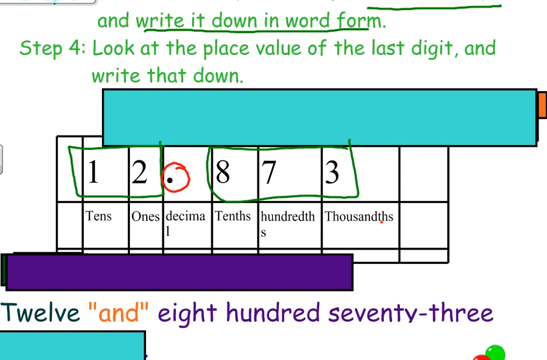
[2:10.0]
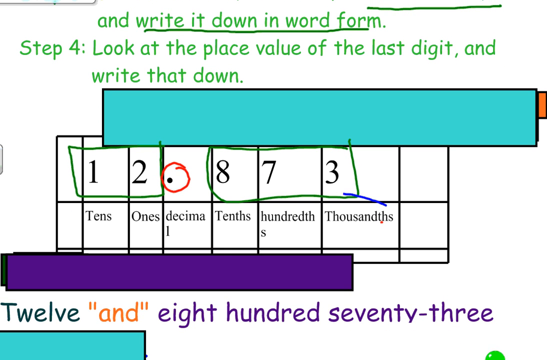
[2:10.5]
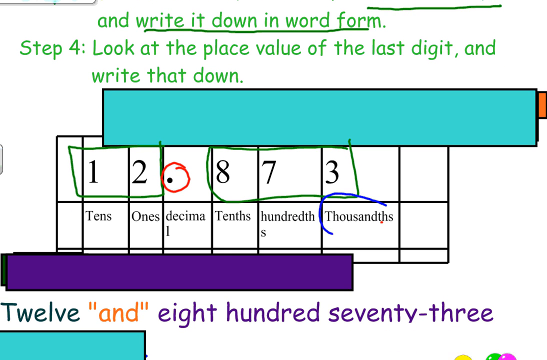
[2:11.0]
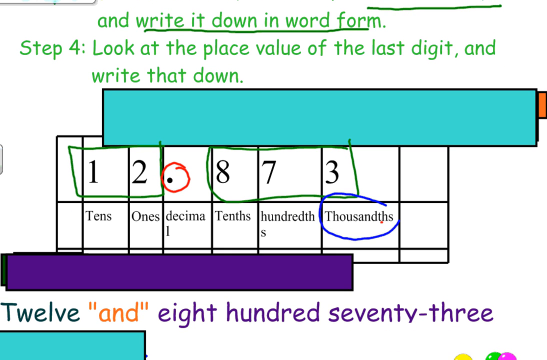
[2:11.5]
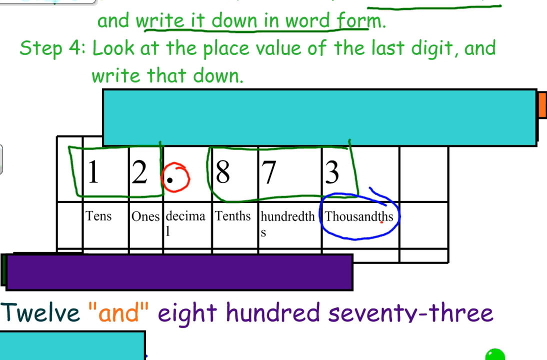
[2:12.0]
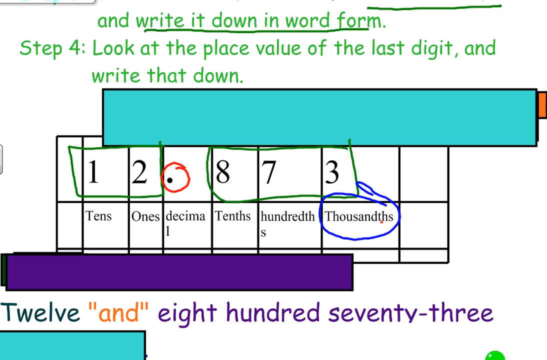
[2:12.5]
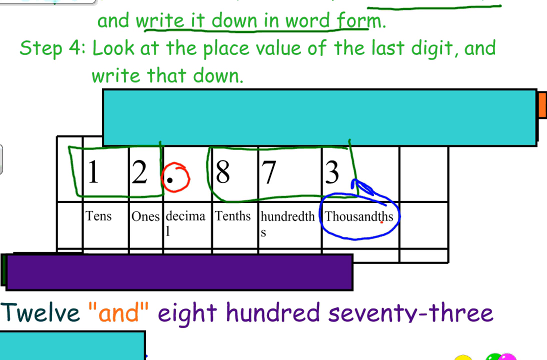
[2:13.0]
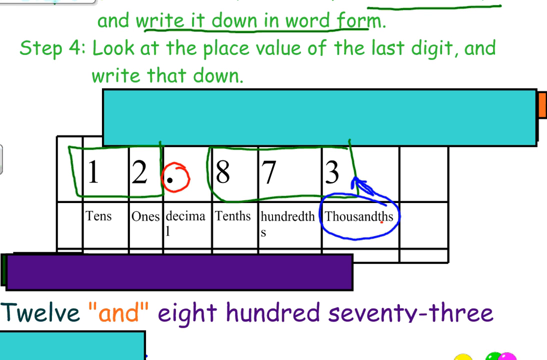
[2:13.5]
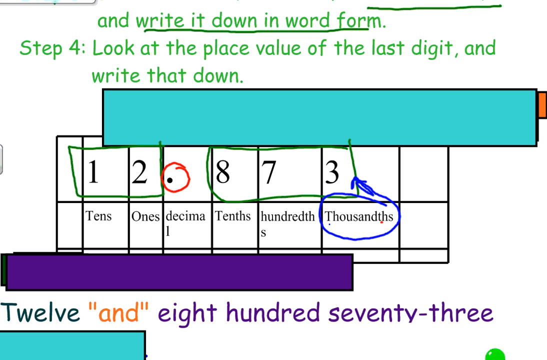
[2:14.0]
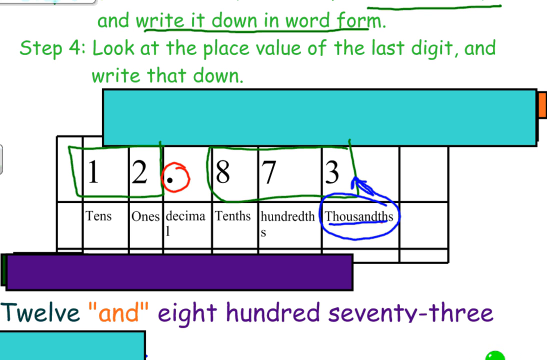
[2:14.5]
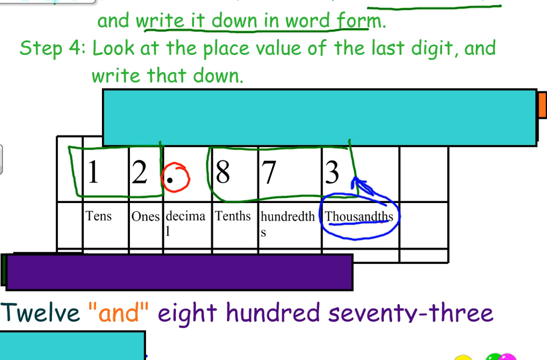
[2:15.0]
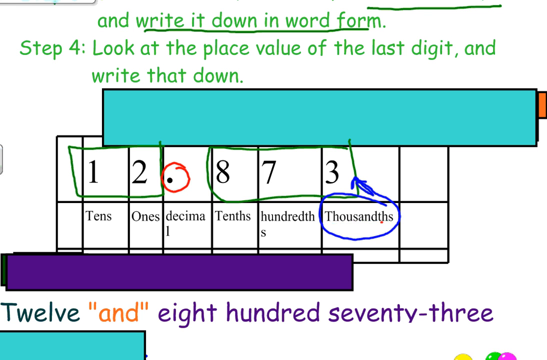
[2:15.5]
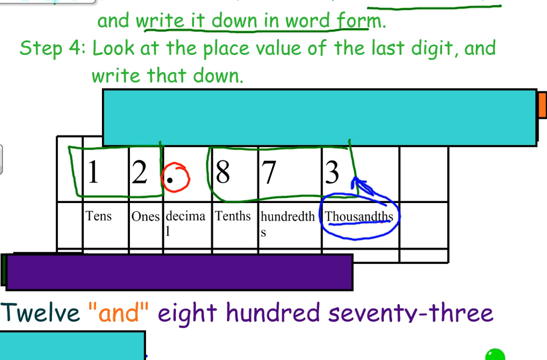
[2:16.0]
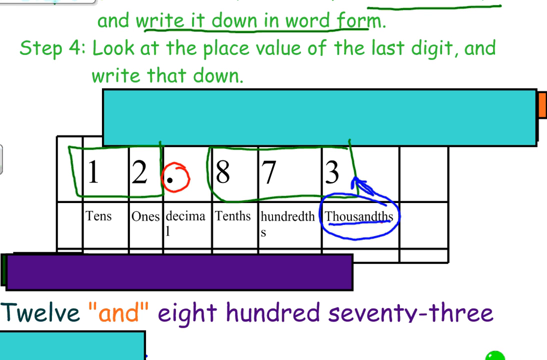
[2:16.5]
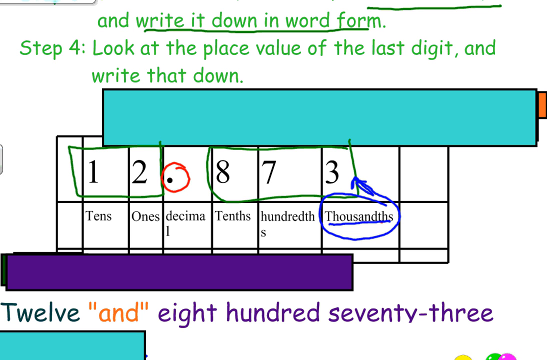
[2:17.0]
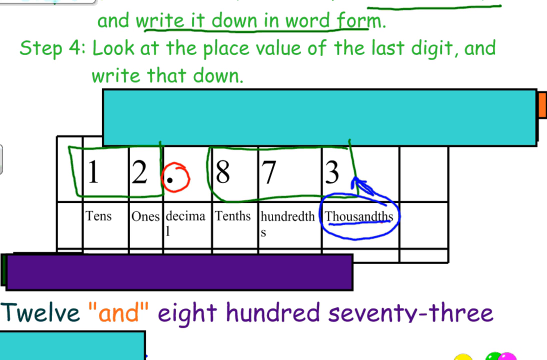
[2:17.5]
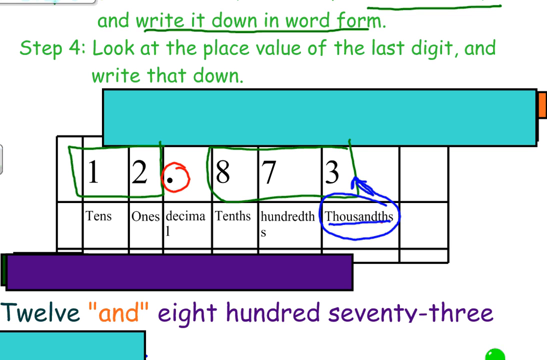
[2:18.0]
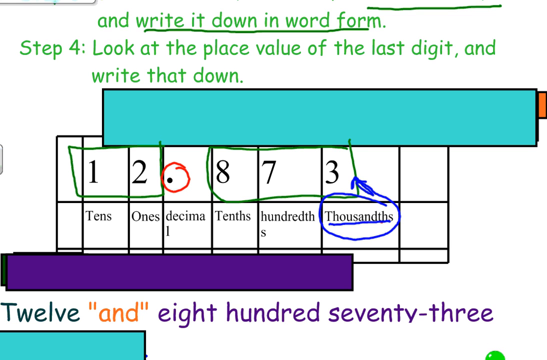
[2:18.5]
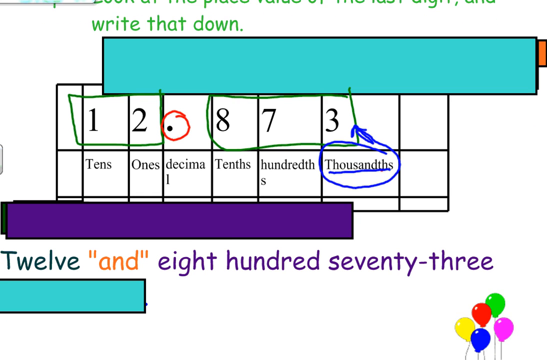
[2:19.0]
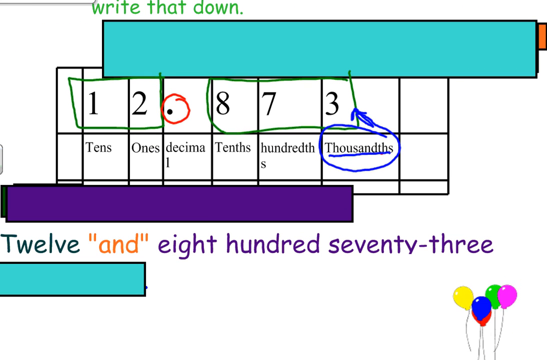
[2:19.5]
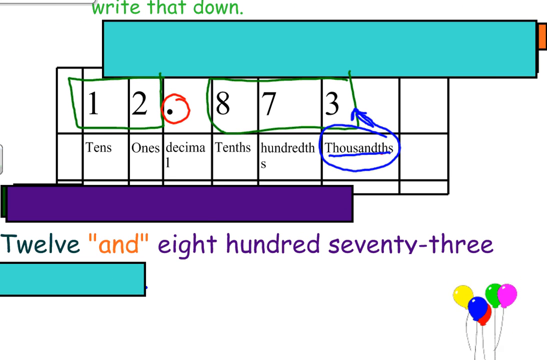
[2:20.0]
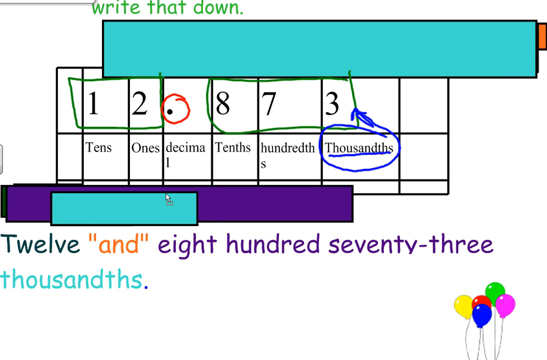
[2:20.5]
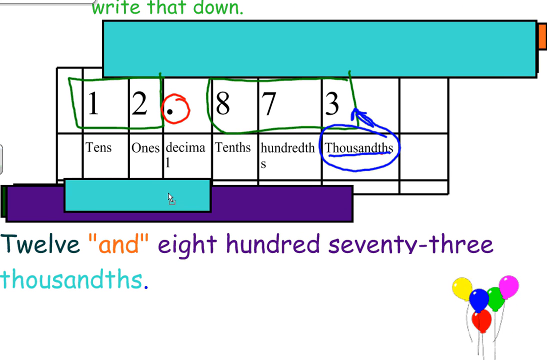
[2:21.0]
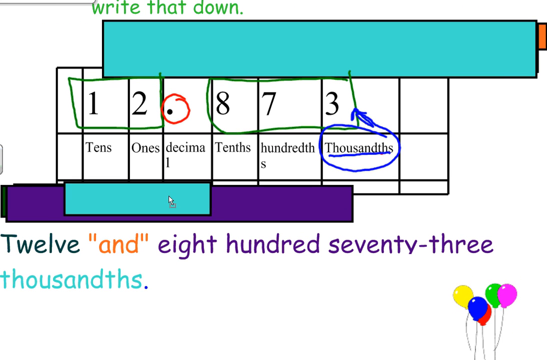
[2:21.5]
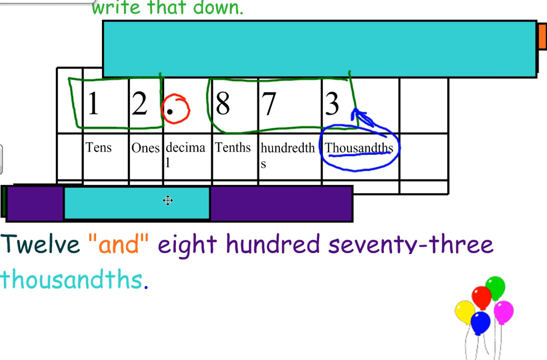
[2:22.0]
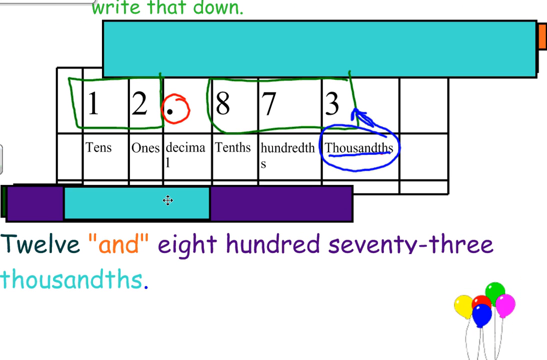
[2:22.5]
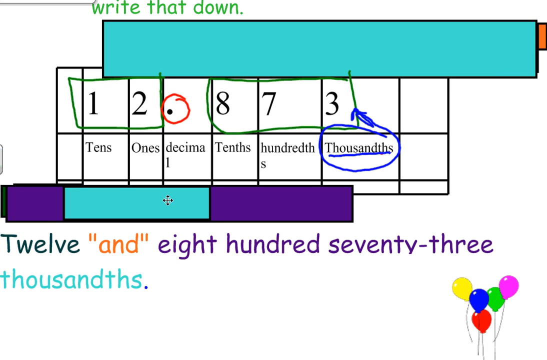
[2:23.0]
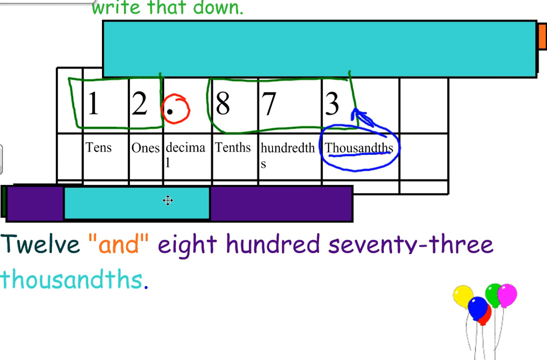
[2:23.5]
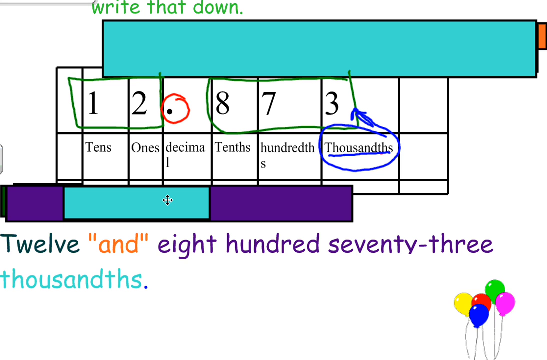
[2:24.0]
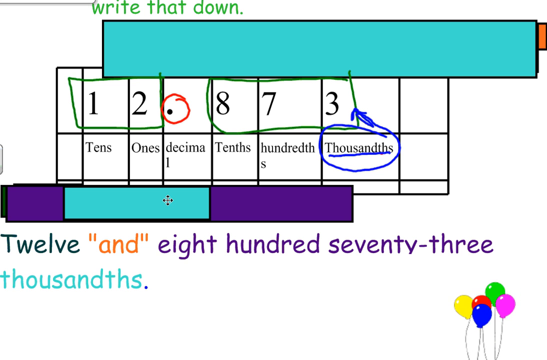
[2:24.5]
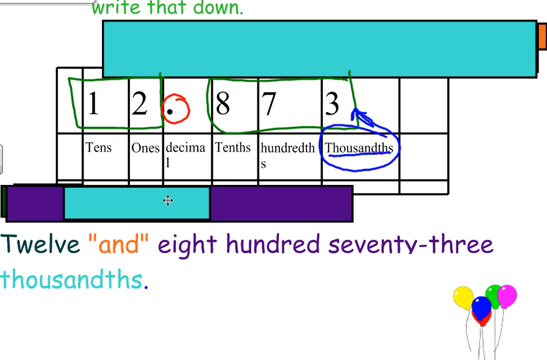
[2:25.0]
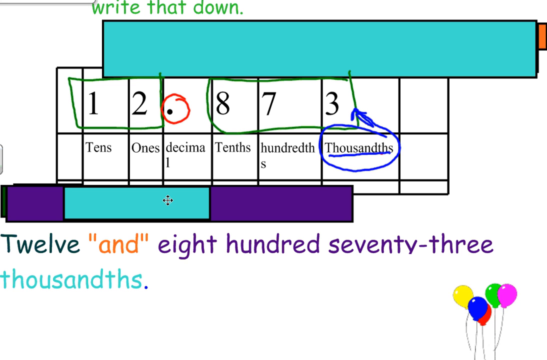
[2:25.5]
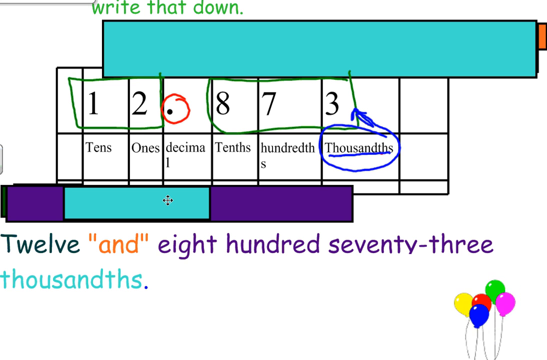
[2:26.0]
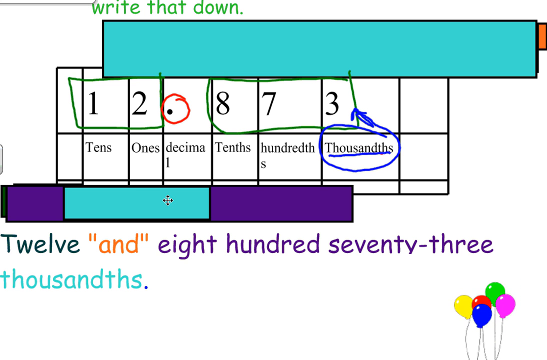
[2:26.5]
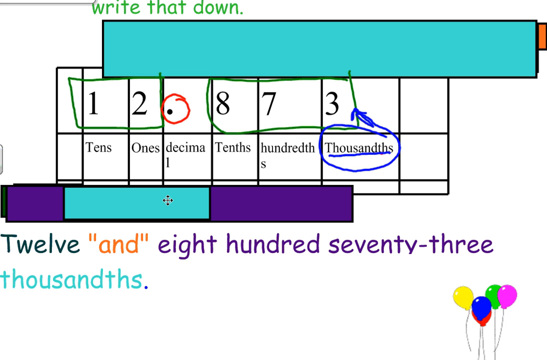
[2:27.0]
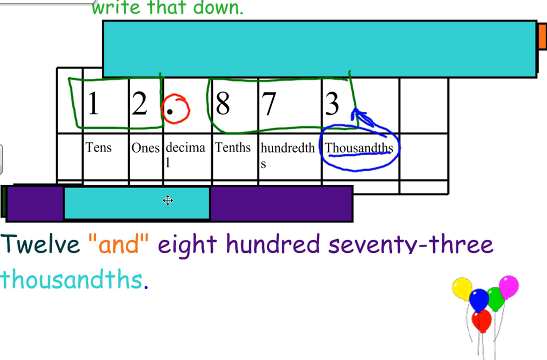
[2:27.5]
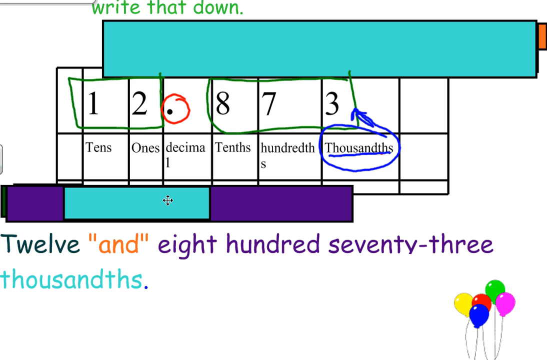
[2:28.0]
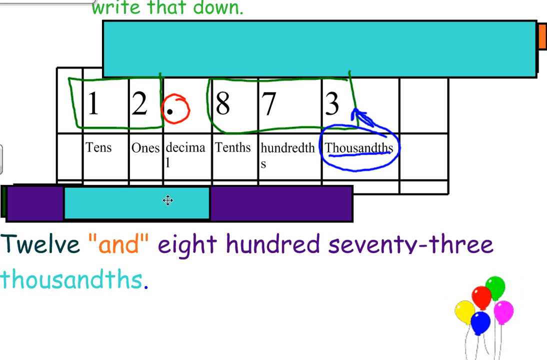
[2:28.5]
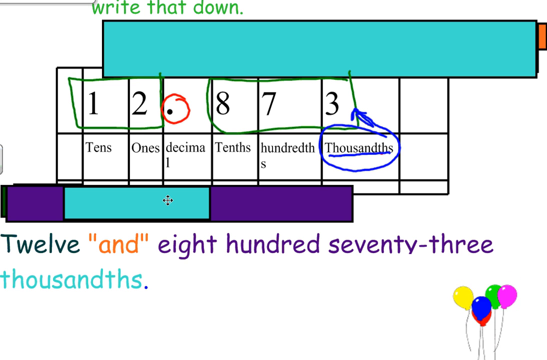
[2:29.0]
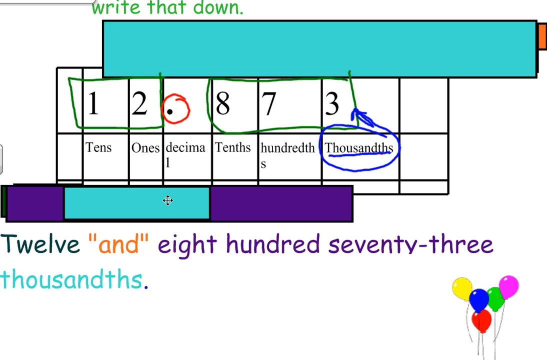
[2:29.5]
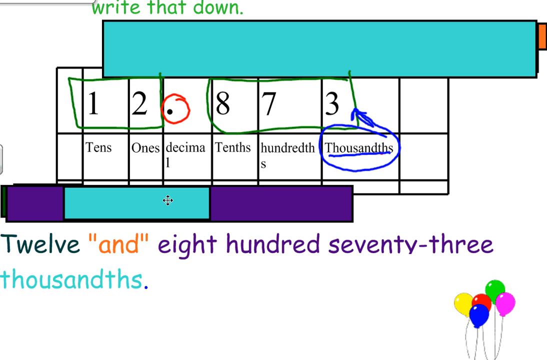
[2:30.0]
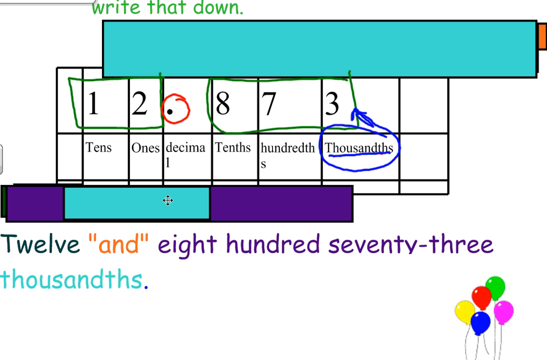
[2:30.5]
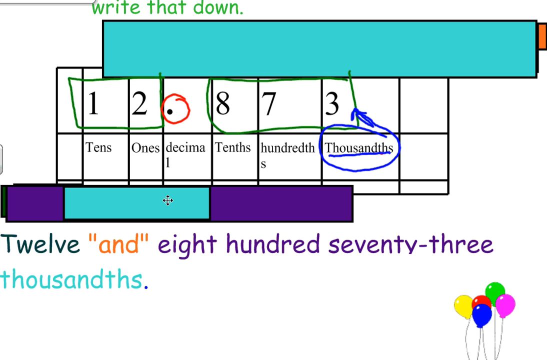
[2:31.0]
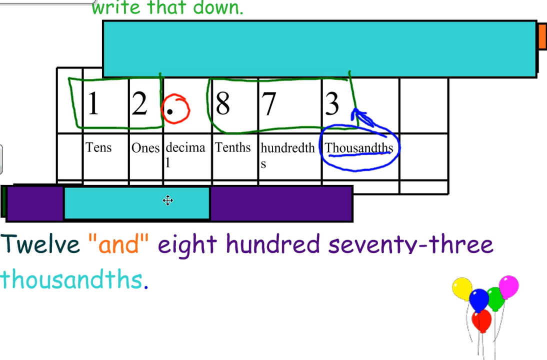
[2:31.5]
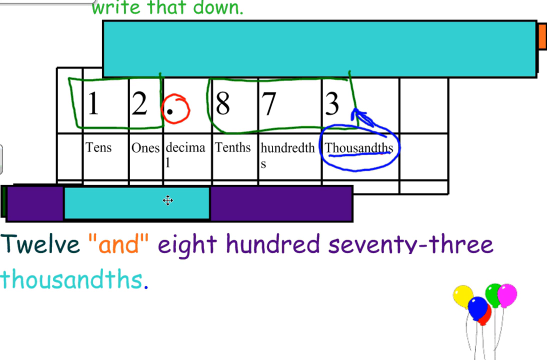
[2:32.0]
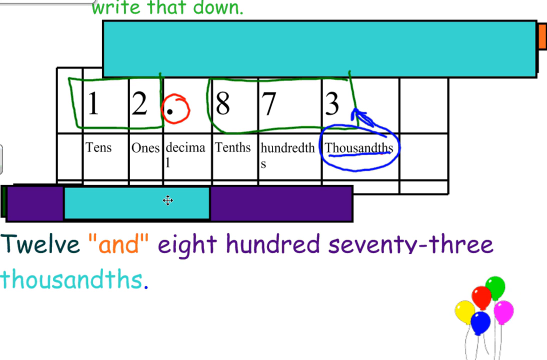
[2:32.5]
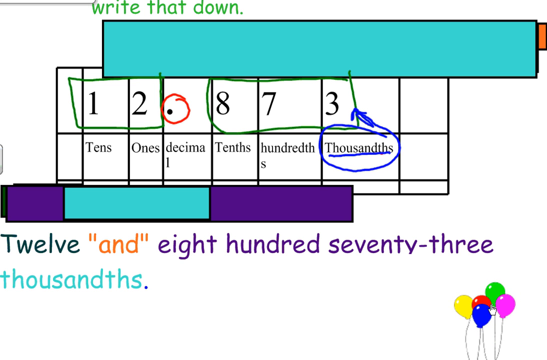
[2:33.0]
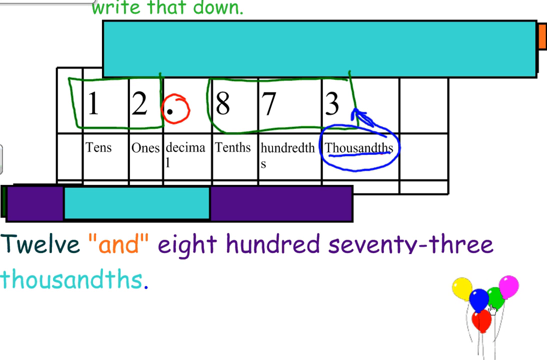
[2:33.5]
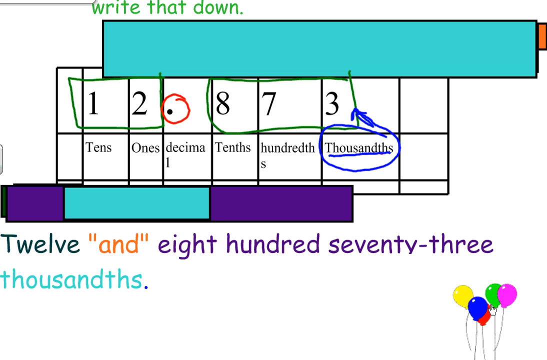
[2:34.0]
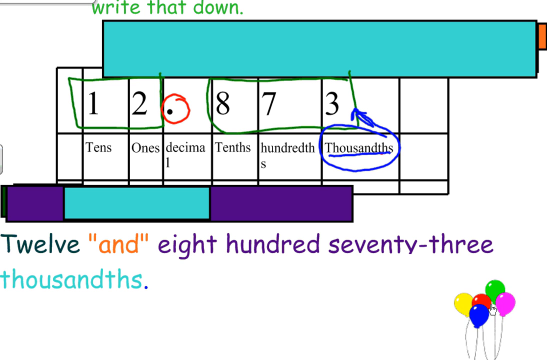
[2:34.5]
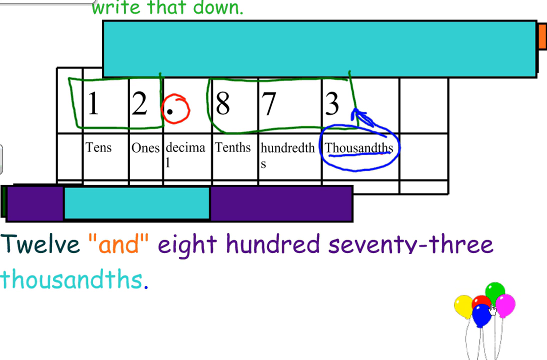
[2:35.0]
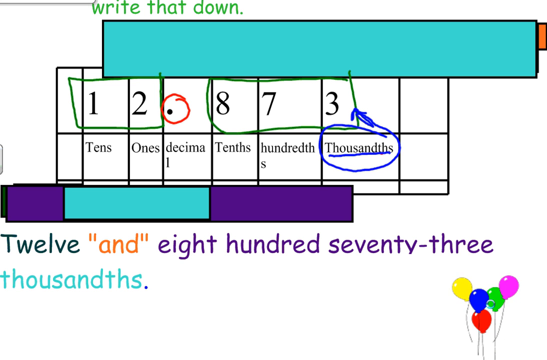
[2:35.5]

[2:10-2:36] The last digit is 3, and the number at the end is 12,873,000. The decimal has been replaced with "and", and the number is written in words, completing all four steps of converting decimals into words.